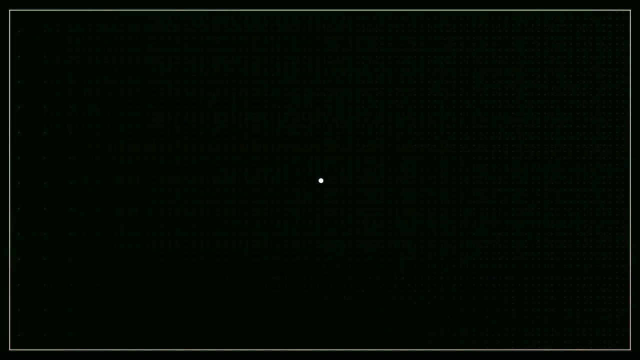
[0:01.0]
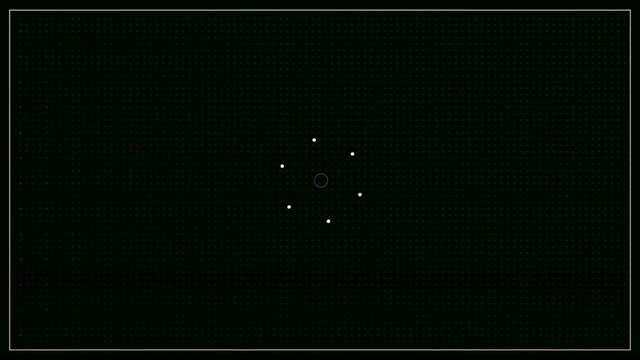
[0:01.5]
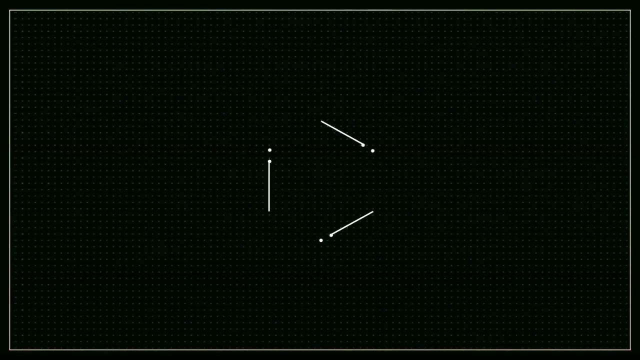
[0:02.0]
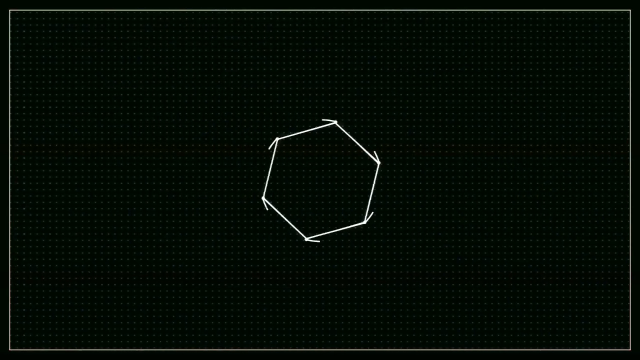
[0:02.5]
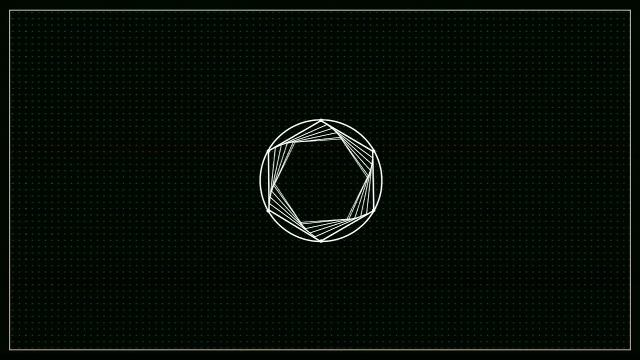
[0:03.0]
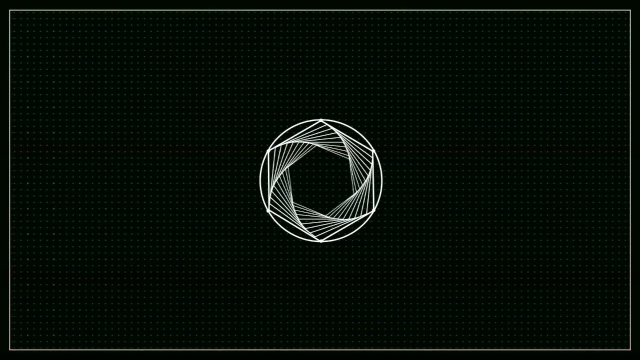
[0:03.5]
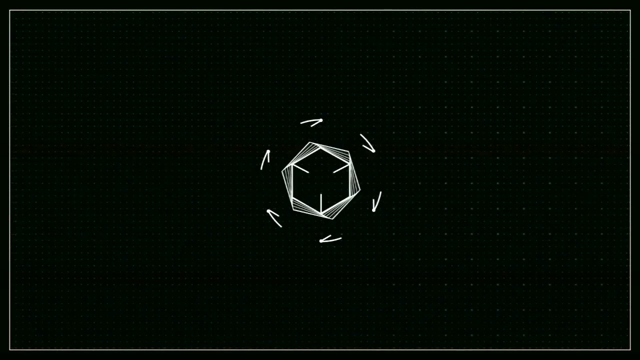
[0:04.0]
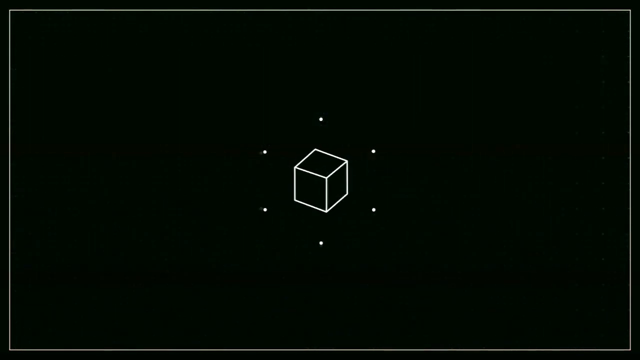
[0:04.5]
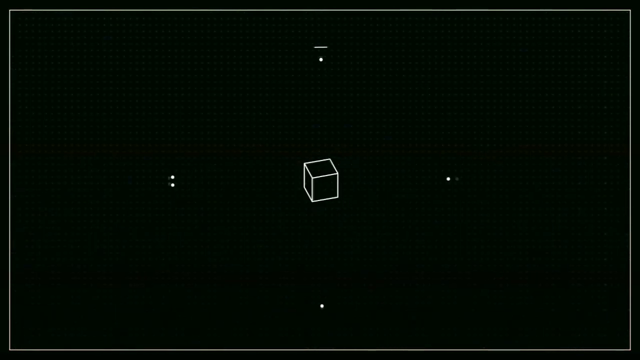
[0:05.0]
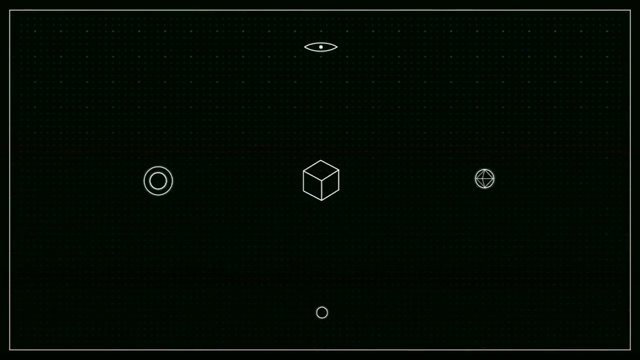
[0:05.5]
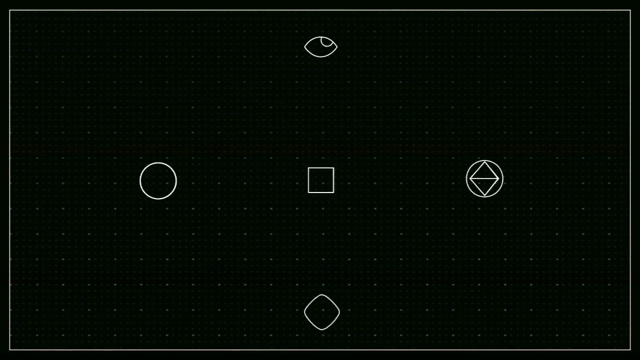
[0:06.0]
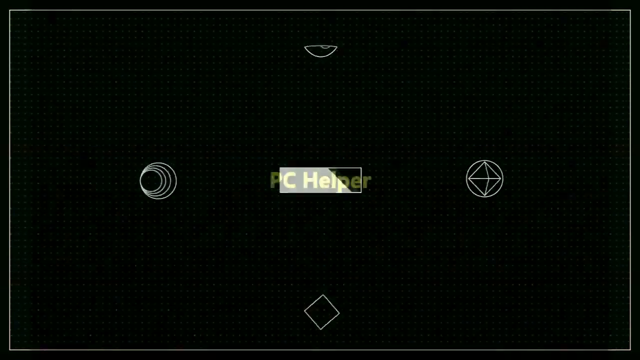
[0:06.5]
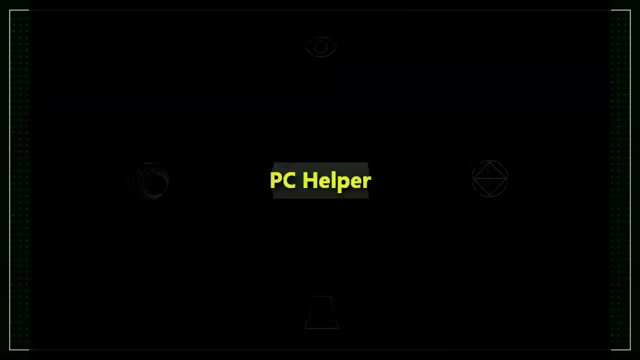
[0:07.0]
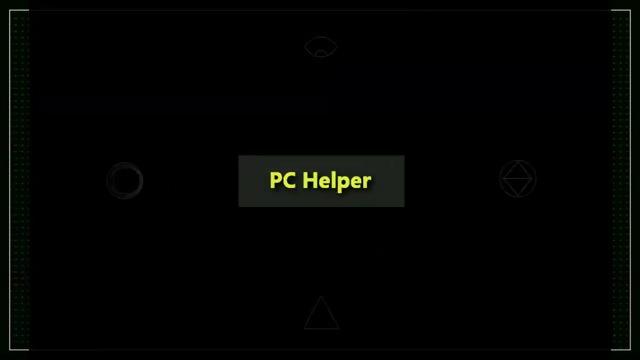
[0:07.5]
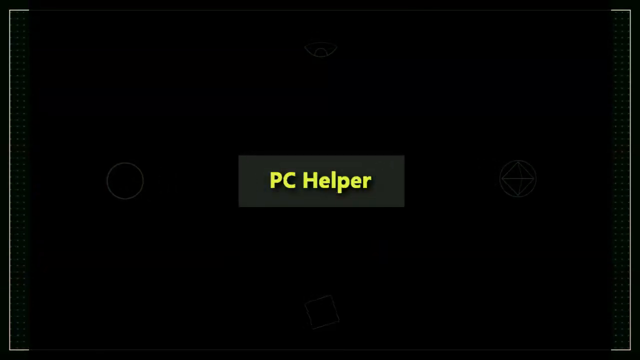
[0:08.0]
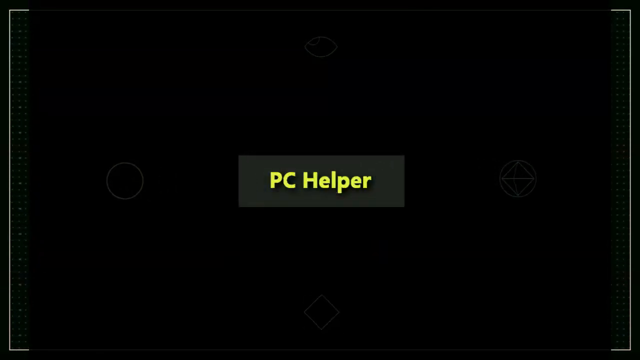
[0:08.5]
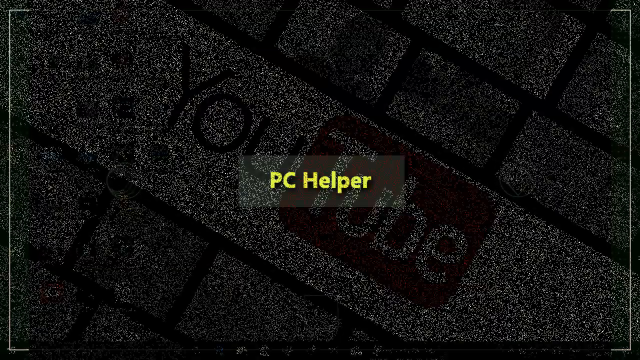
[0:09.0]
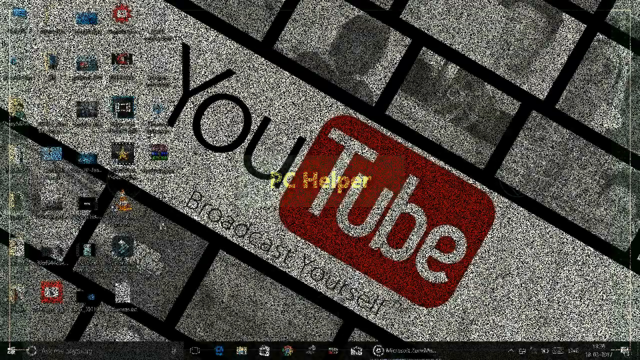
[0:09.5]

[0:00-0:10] The video does not appear to have a title. It opens as the introduction to a YouTube help video of some sort: a black screen shows a white graphical image that forms a cube, and then the words "PC Helper" appear on the black screen. At the very end, the beginning of the YouTube video appears. There are no humans or animals. The footage appears to be a screen capture of a YouTube video rather than something recorded by hand.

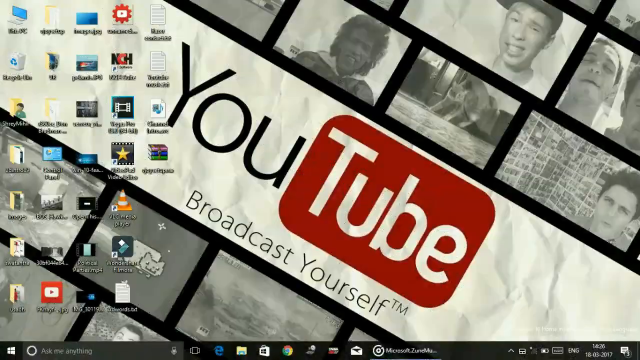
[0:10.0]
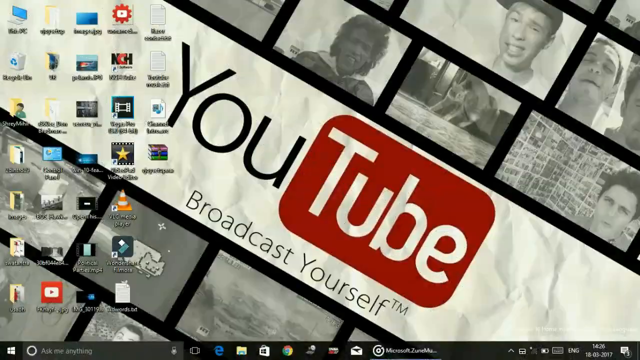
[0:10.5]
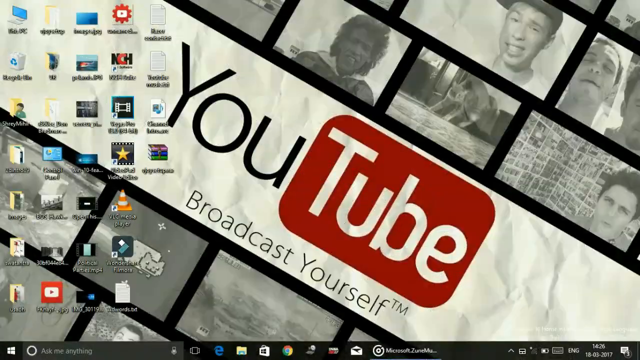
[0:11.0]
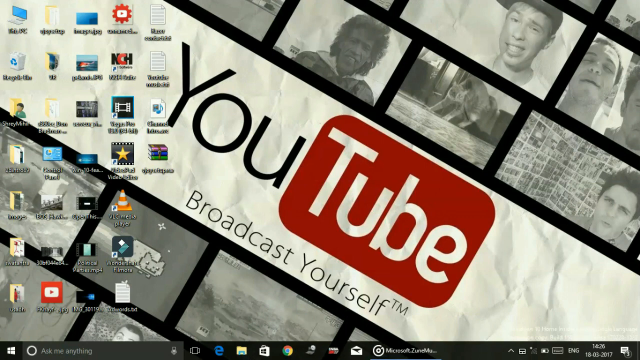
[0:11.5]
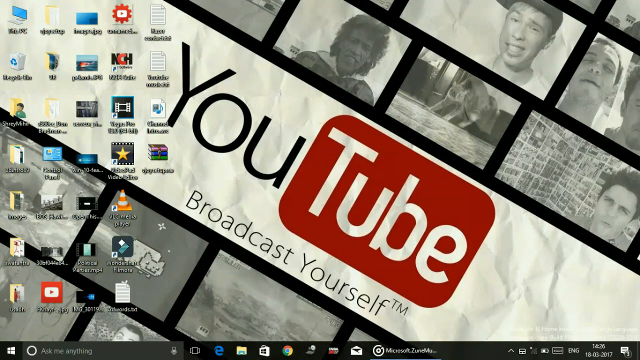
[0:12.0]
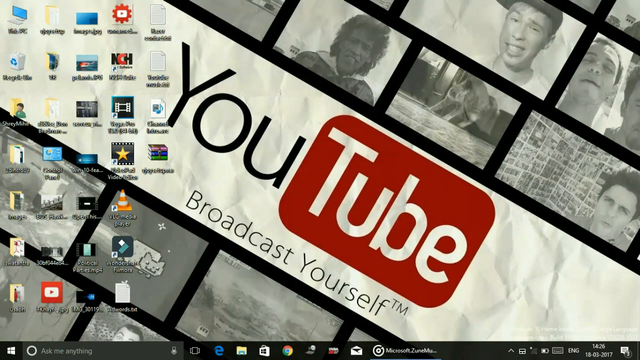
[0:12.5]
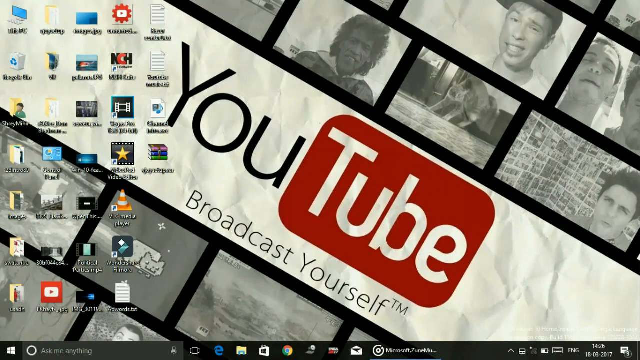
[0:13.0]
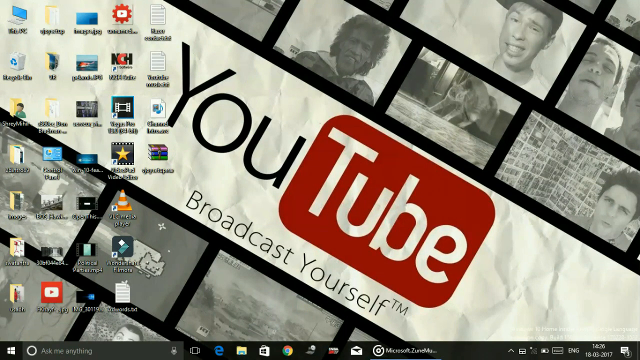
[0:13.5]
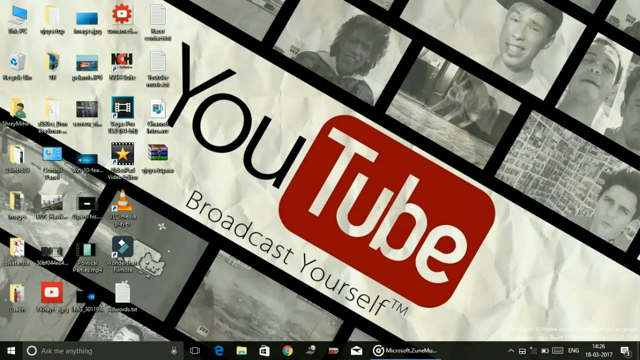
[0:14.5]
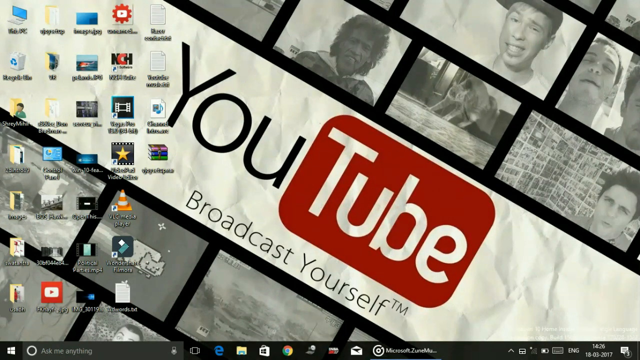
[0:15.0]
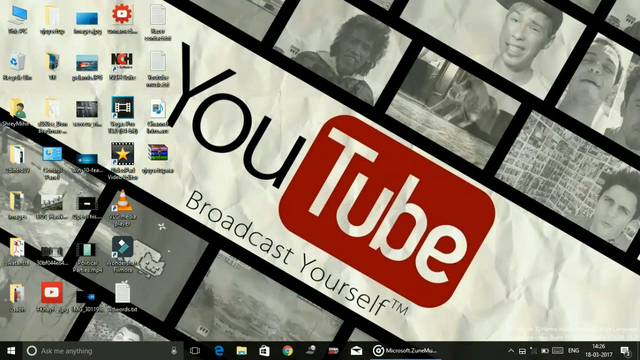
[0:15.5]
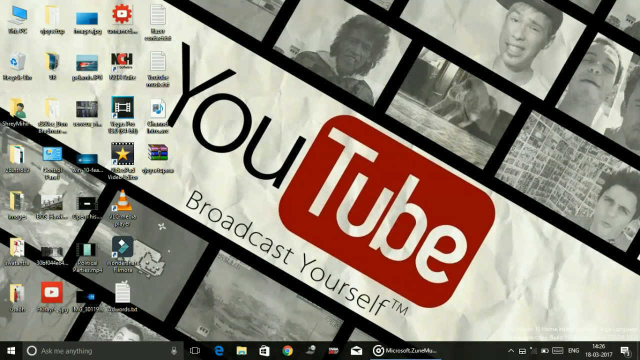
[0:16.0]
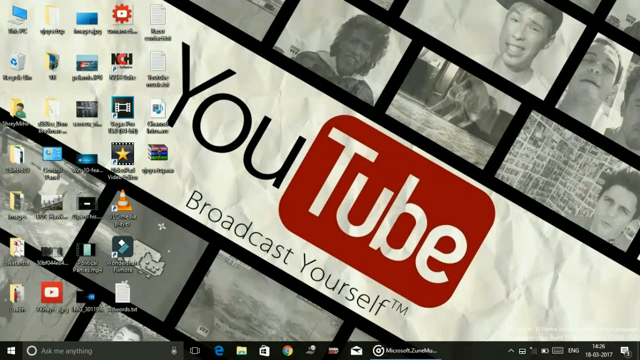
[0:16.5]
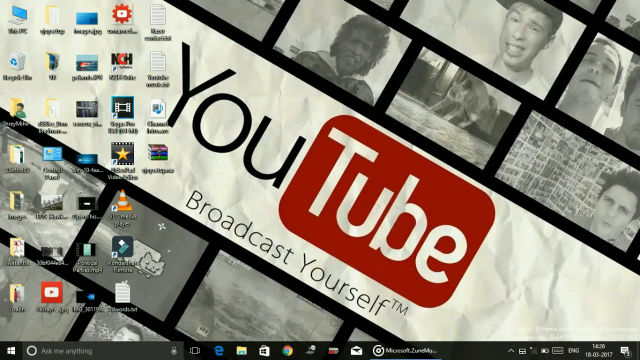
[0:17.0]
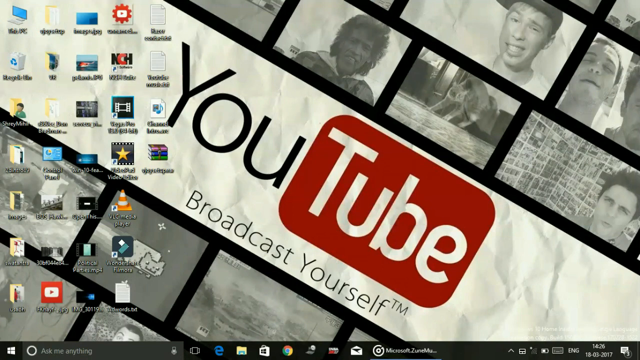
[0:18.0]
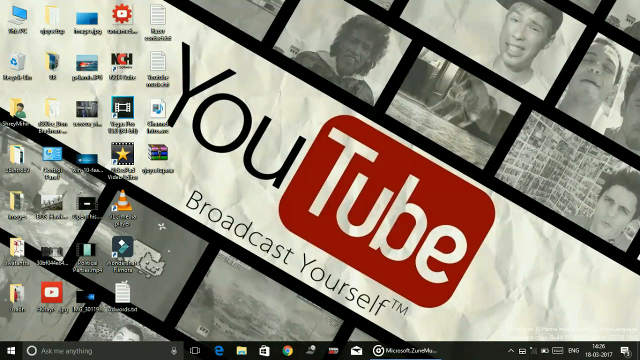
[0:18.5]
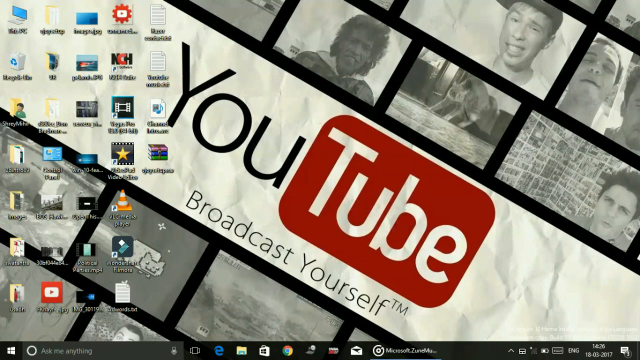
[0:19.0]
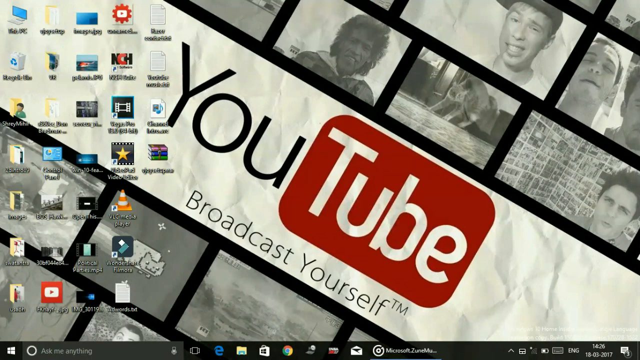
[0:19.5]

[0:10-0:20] A Windows desktop screen appears, apparently Windows 10, with a wallpaper that reads "YouTube, broadcast yourself." Nothing happens; it appears to be a static shot of the desktop. Many desktop icons are lined up in rows and columns on the left side of the screen, above the Windows Start button. No humans or animals are present; the entire shot is of the Windows screen.